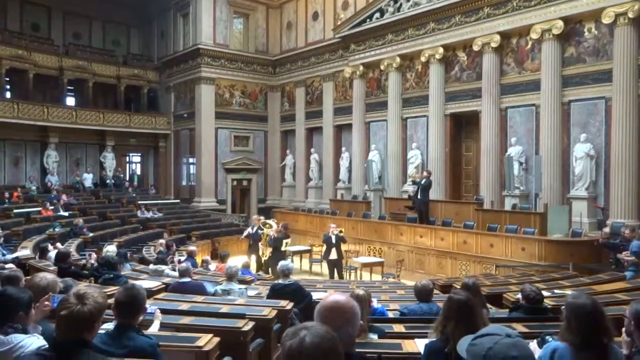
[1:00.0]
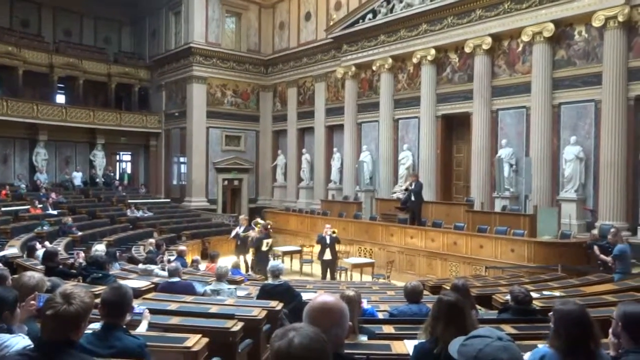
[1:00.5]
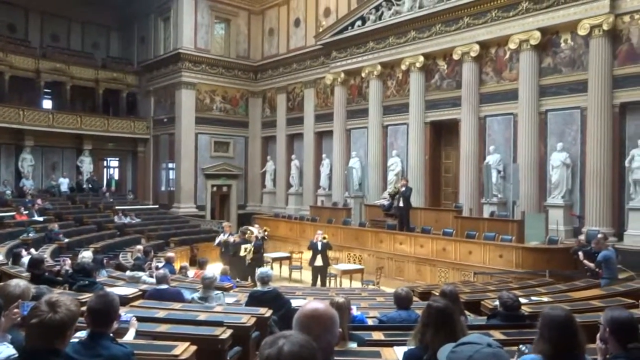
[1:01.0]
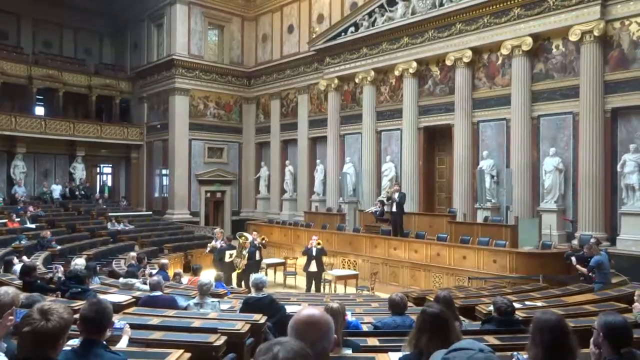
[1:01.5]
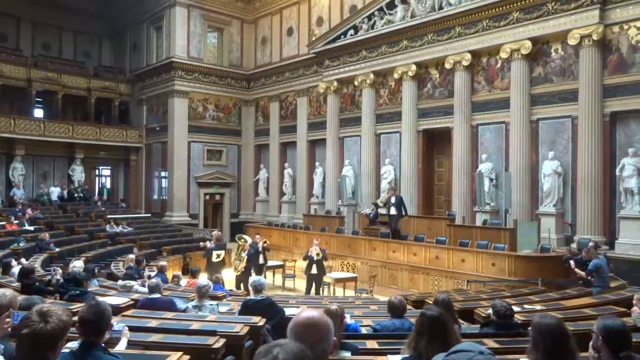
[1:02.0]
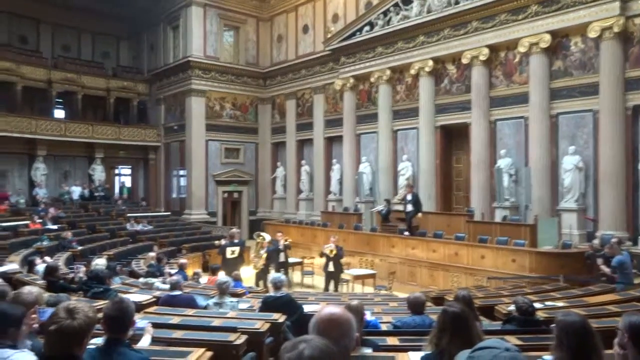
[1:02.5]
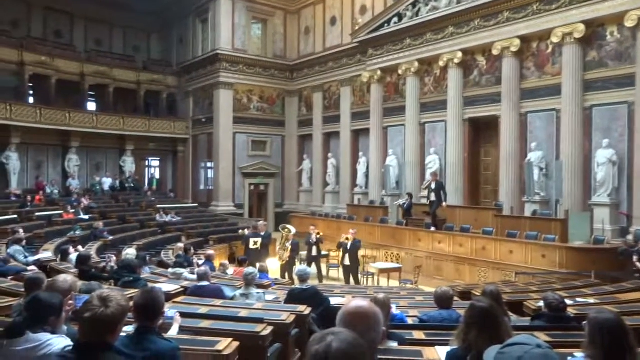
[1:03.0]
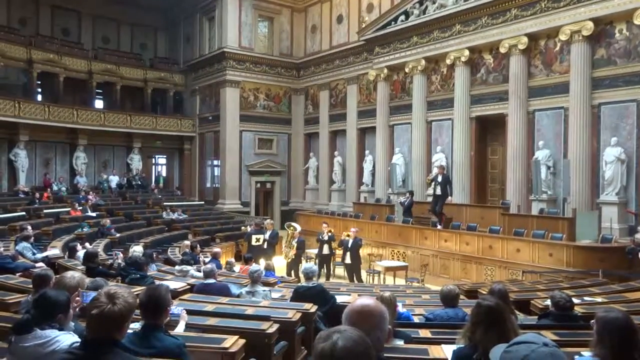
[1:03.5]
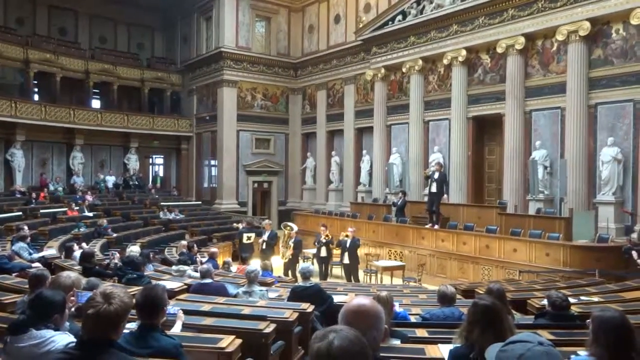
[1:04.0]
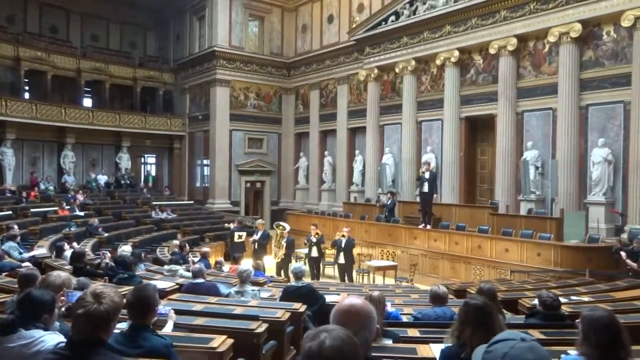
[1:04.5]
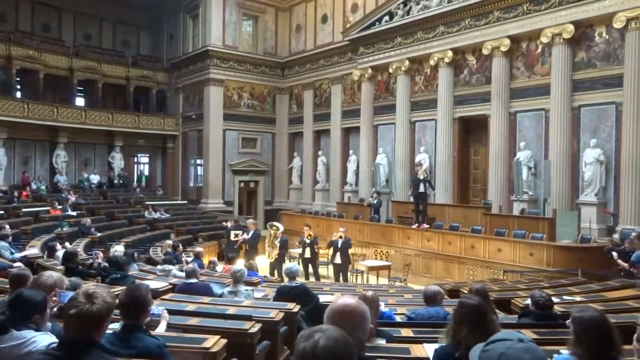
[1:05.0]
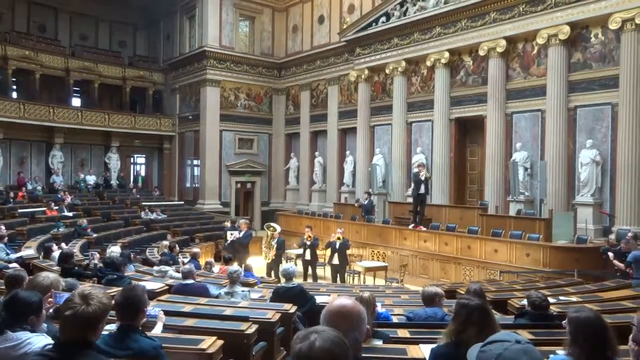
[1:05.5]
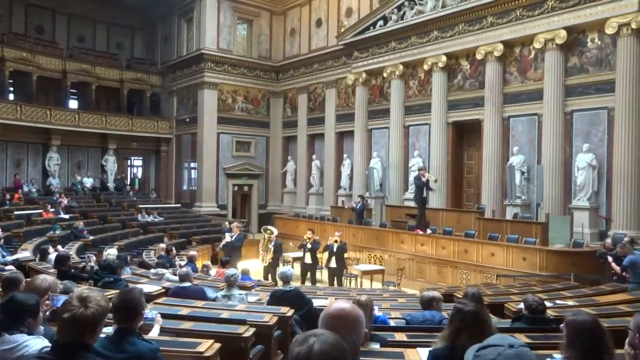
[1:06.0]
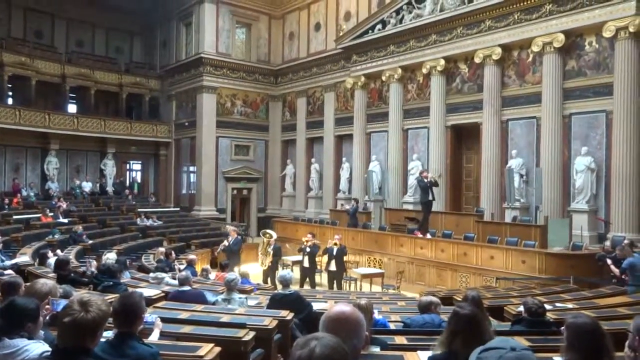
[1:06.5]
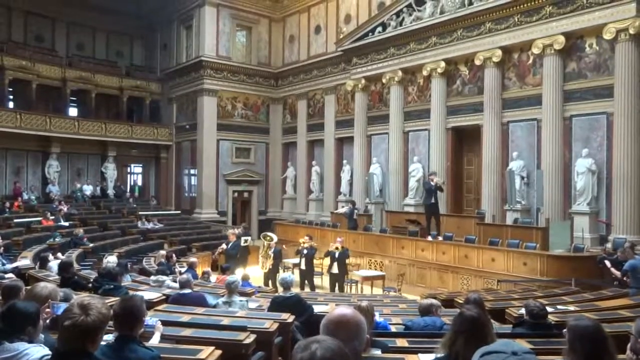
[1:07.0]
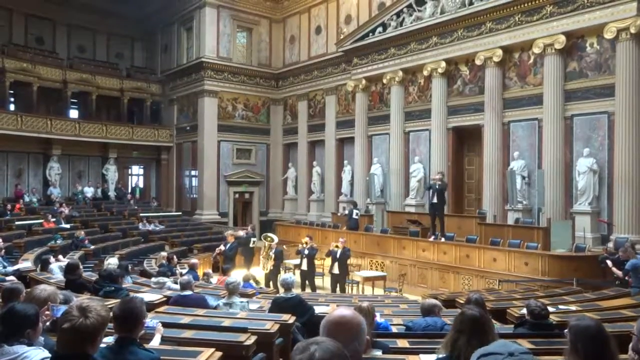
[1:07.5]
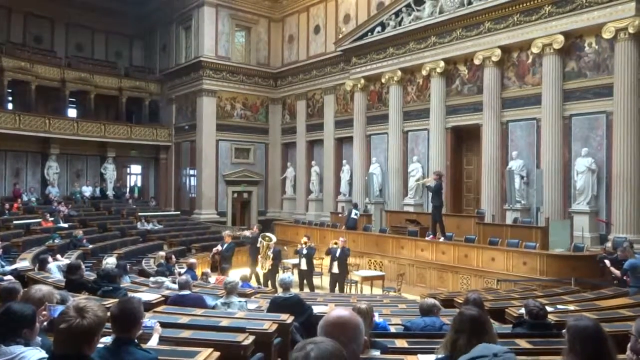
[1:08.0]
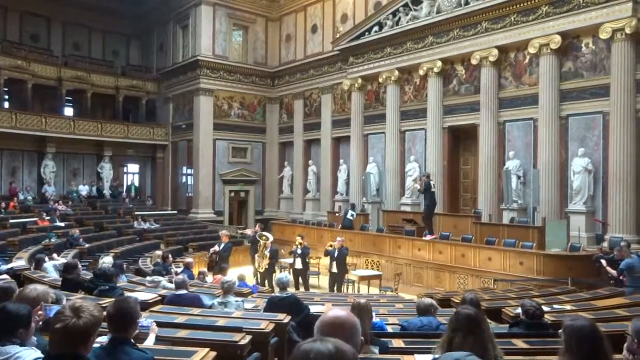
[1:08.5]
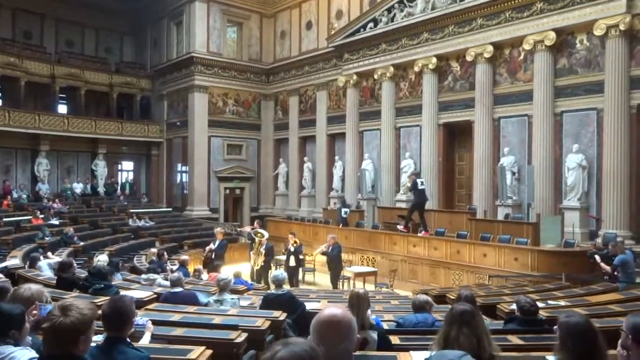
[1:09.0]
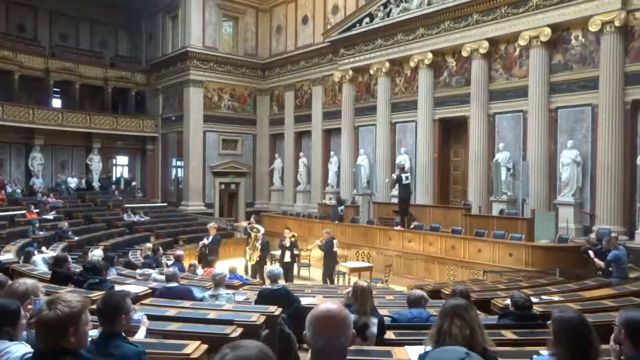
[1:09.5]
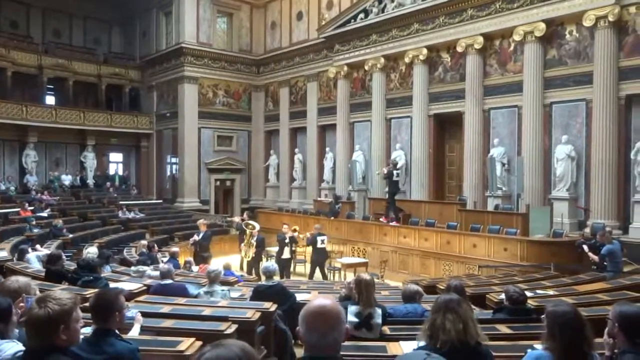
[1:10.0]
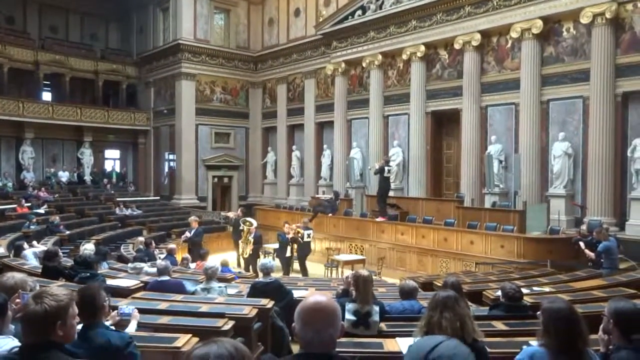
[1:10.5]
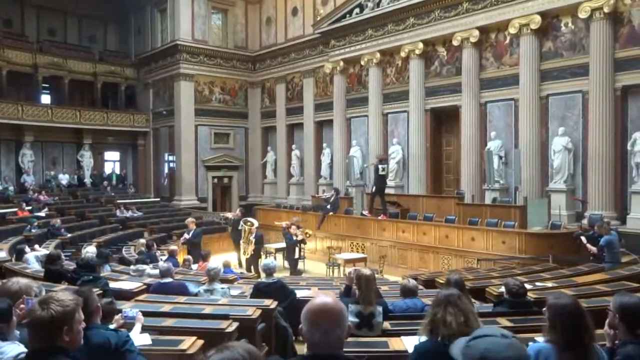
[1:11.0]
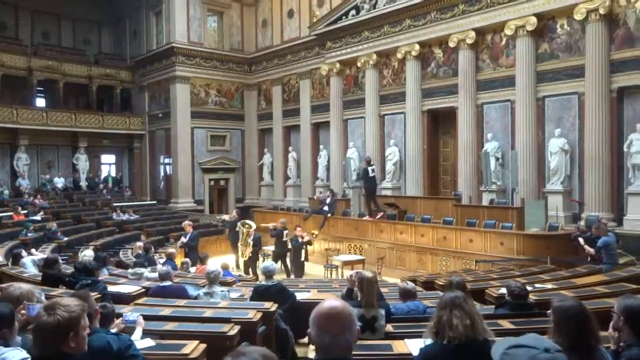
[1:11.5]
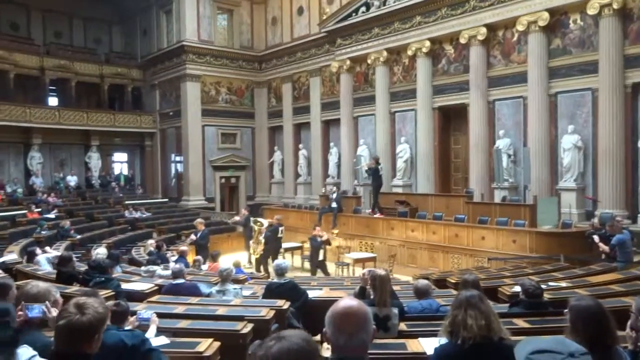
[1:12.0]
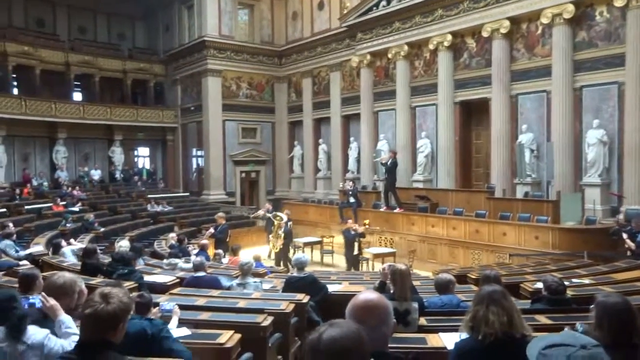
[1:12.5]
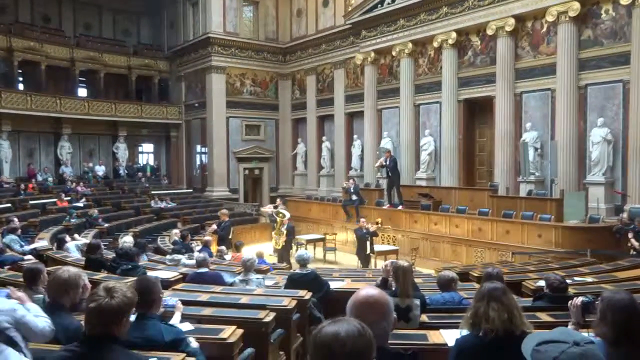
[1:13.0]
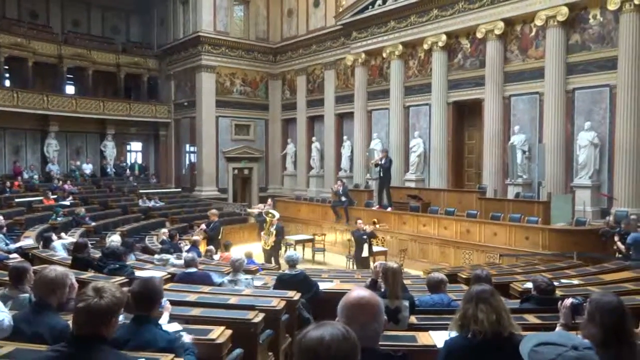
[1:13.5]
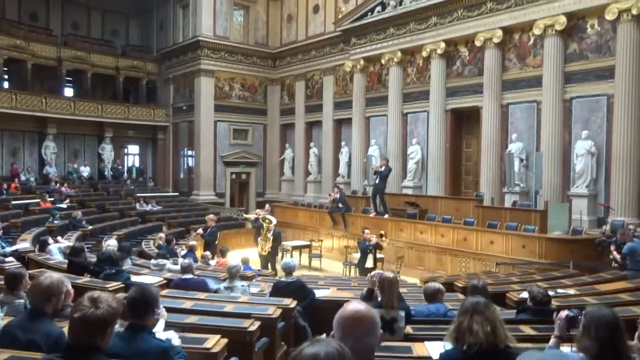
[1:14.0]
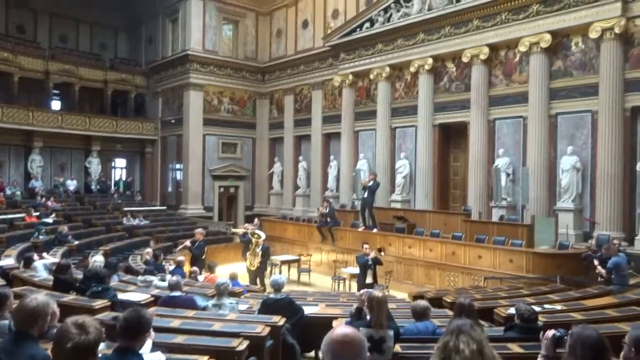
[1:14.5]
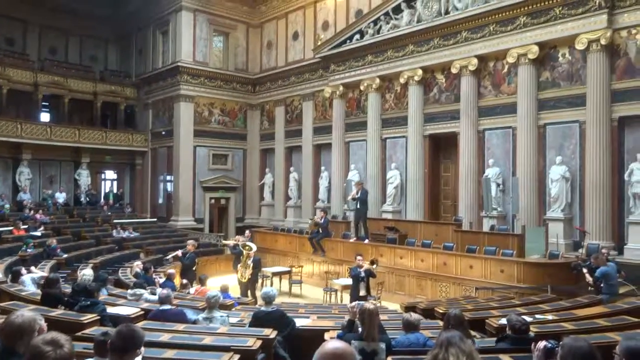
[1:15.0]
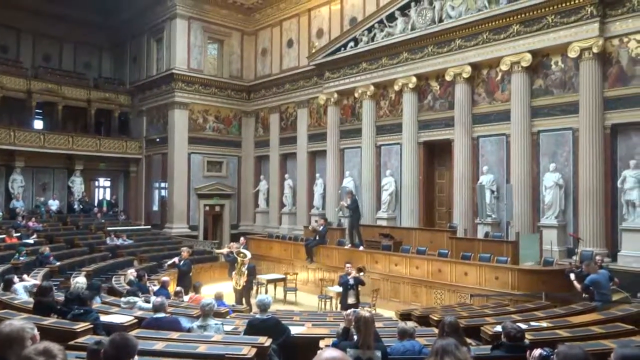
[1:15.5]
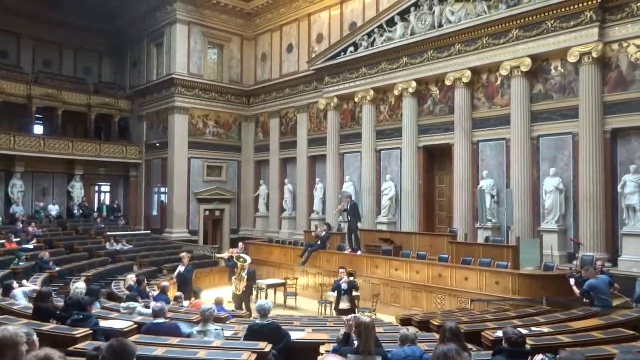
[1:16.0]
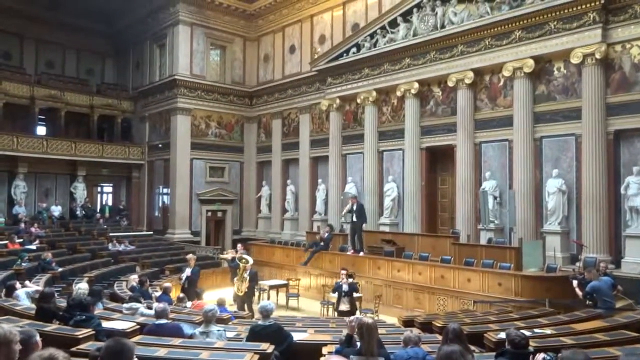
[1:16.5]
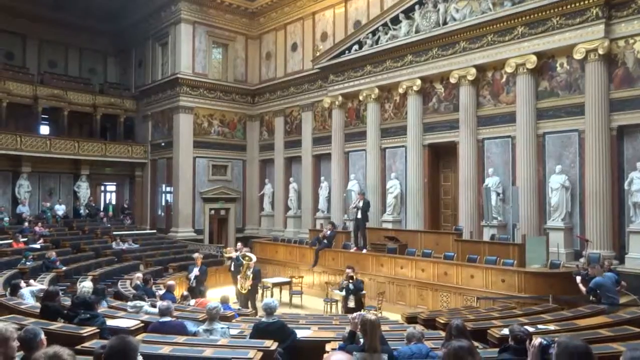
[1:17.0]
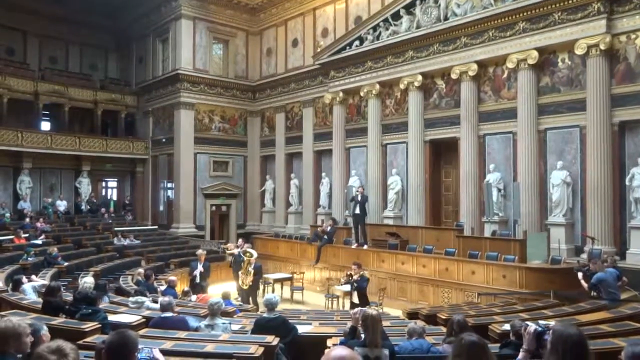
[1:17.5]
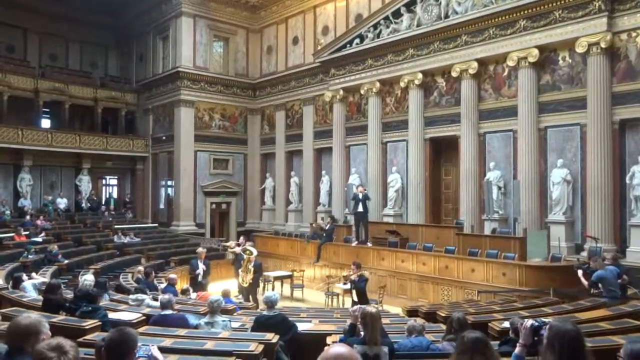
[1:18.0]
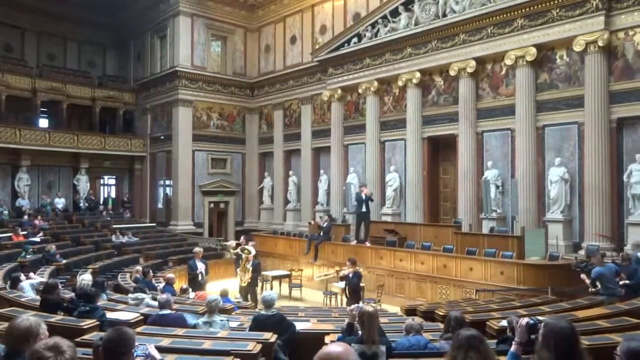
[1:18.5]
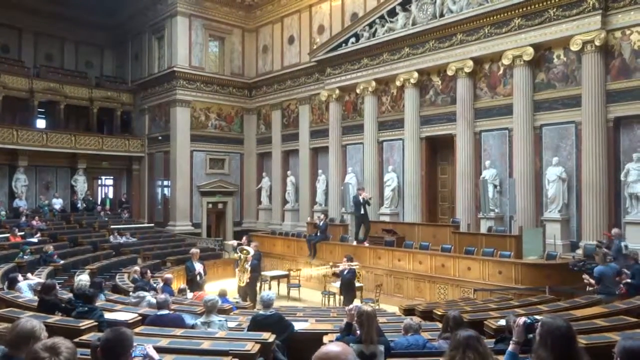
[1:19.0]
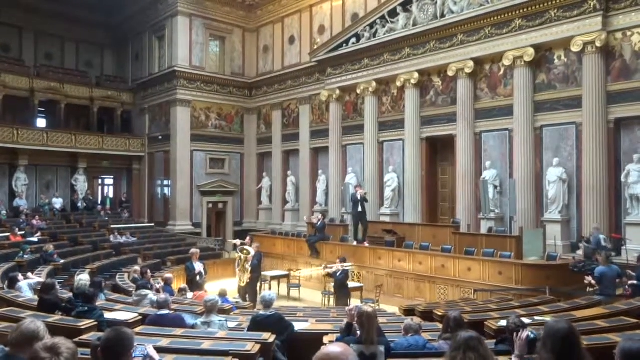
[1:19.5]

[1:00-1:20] A wide shot continues of people playing musical instruments in some sort of government hall building. The man is standing on the chair, and another man stands somewhat behind him, playing. In front of them, at floor level, five people are playing; one has a big trumpet and the others have smaller horns. Most of the people in the crowd are now sitting, and a man on the right side with a camera is recording what is going on. The players wander around aimlessly as they blow their horns. The man now stands up on the wooden portion, walking back and forth as he blows the horn, while the other person sits on the edge of the wooden portion blowing his horn. The men on the floor move a little closer to the people in the crowd as they blow, apparently some sort of protest. One walks farther to the right and one walks closer on the left. A person in the bench area starts to stand, putting his foot up as if to stand, then sits back down. A cameraman moves in from the right side behind the chairs to get a closer look at the two men blowing horns on the podium area.